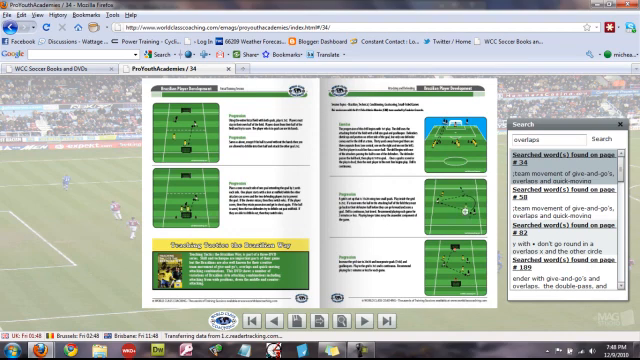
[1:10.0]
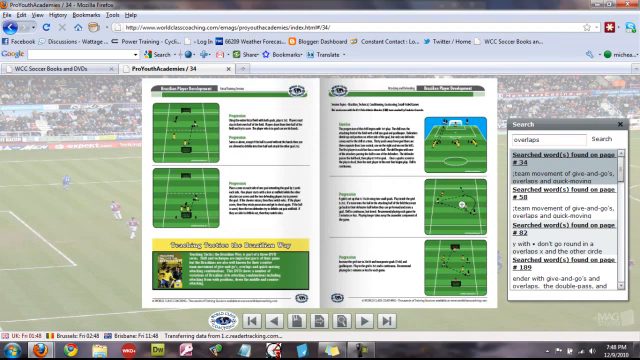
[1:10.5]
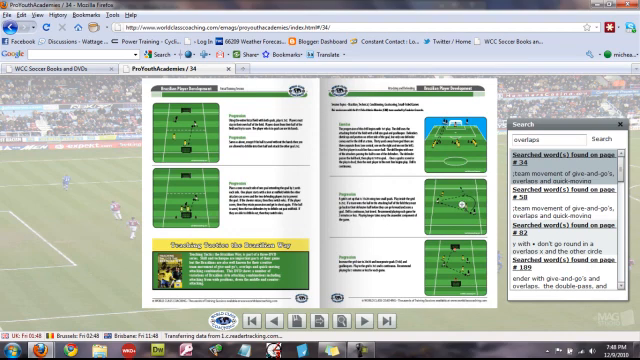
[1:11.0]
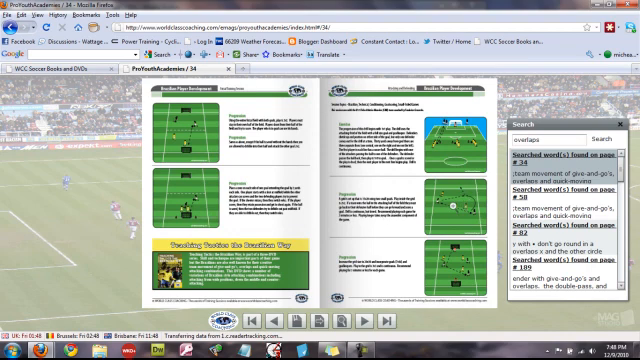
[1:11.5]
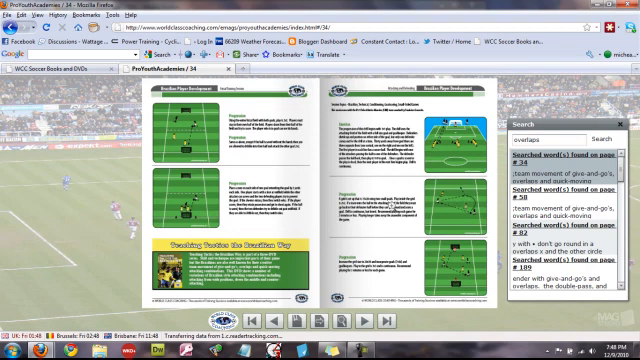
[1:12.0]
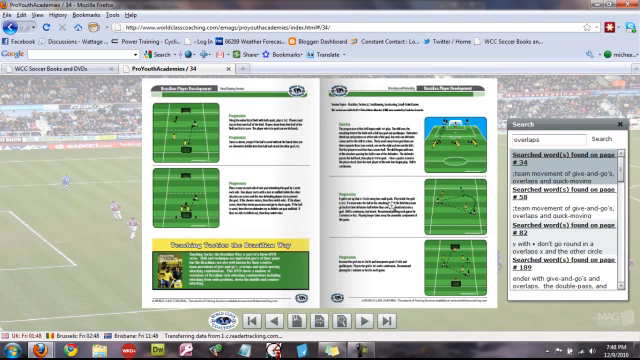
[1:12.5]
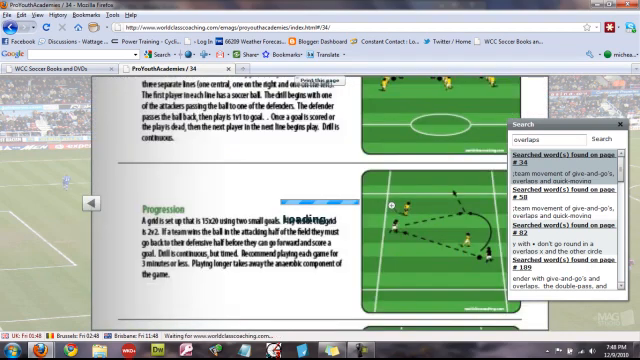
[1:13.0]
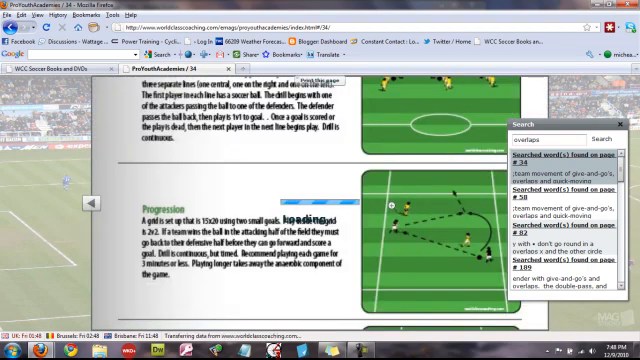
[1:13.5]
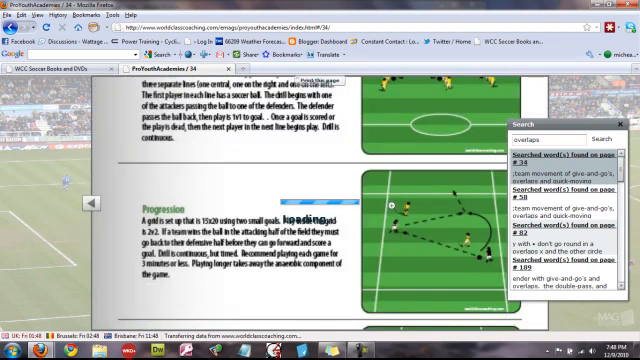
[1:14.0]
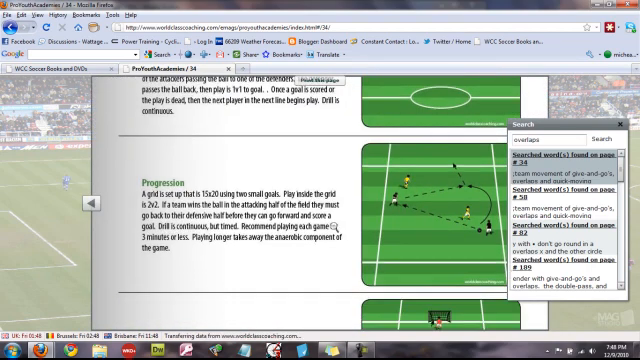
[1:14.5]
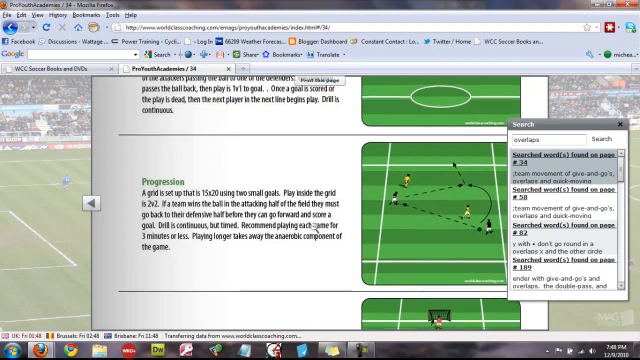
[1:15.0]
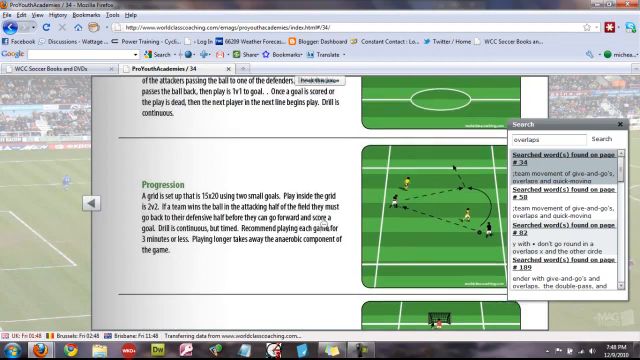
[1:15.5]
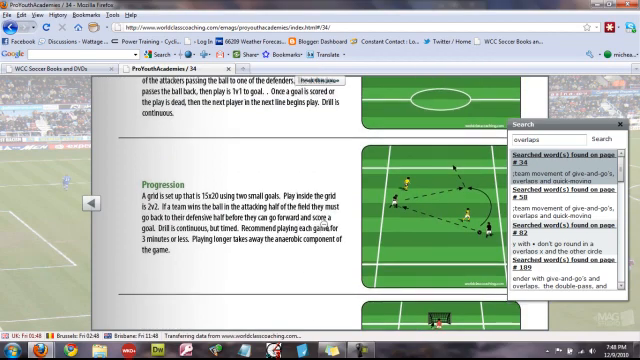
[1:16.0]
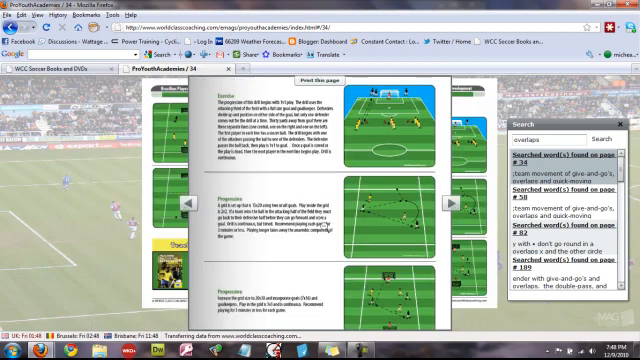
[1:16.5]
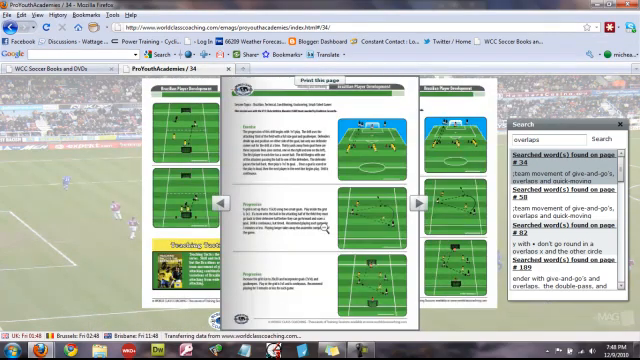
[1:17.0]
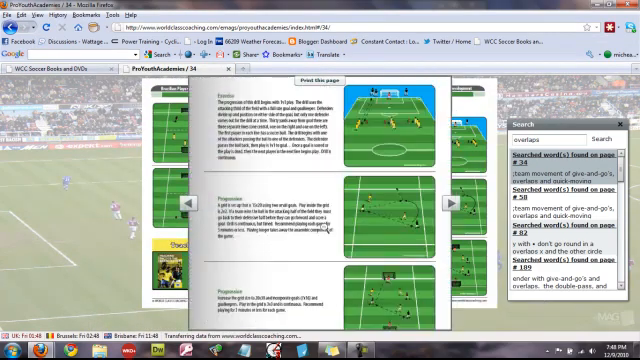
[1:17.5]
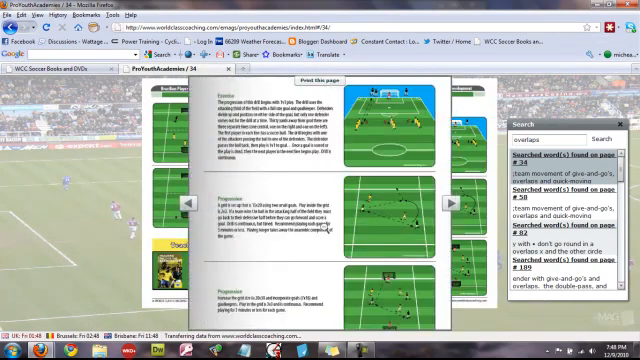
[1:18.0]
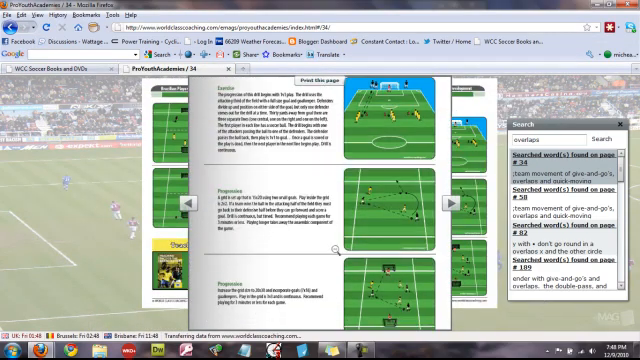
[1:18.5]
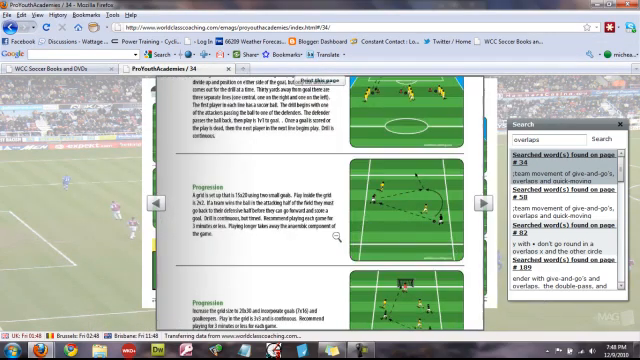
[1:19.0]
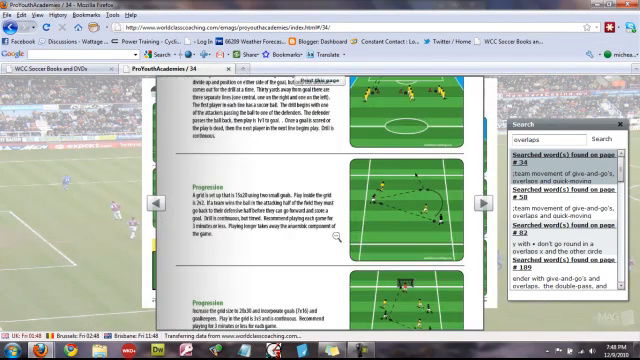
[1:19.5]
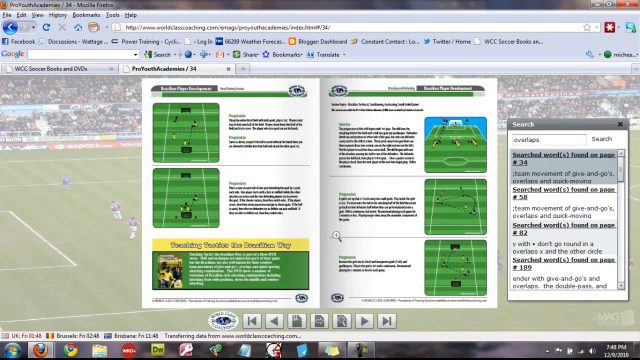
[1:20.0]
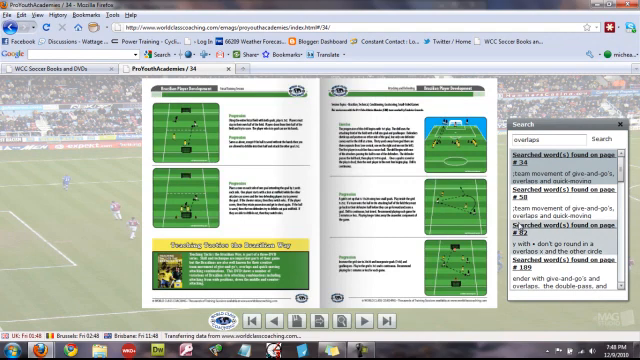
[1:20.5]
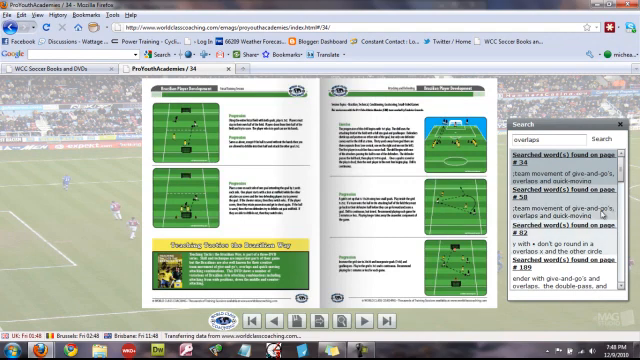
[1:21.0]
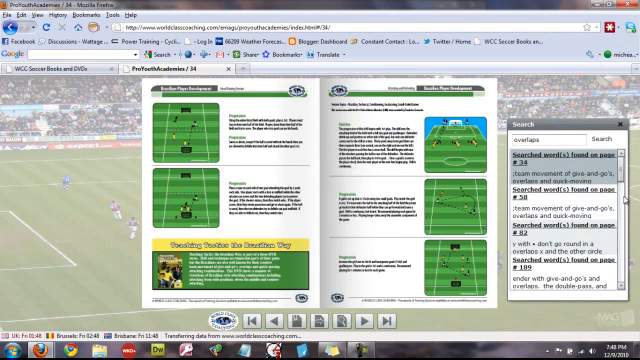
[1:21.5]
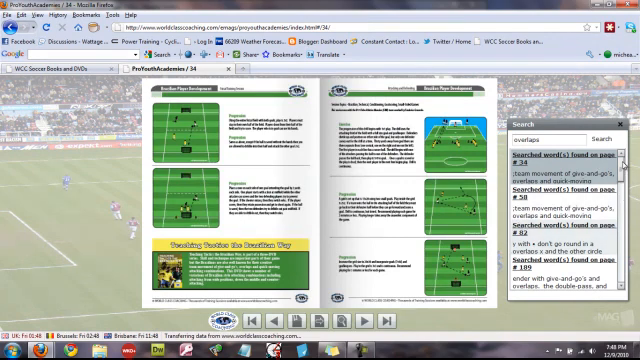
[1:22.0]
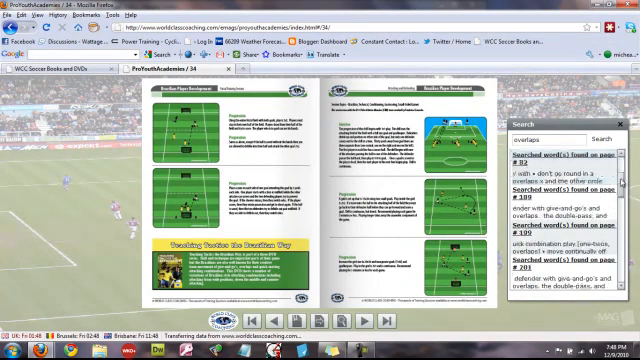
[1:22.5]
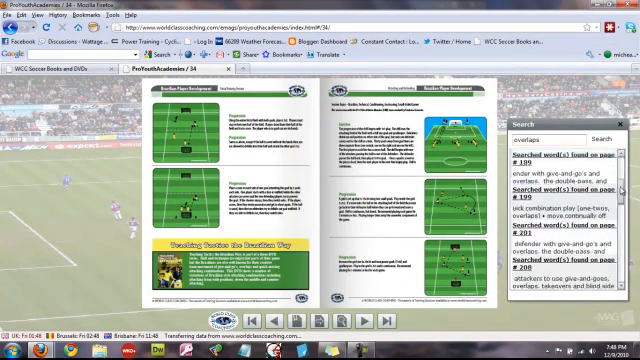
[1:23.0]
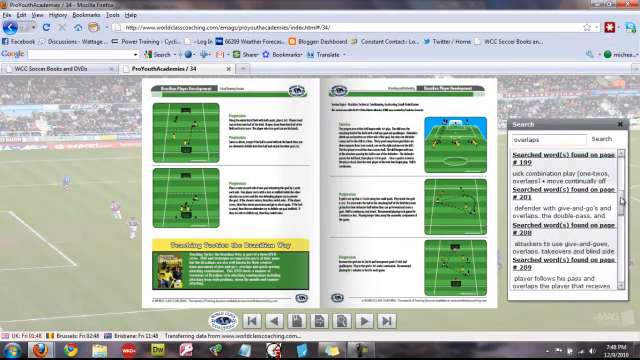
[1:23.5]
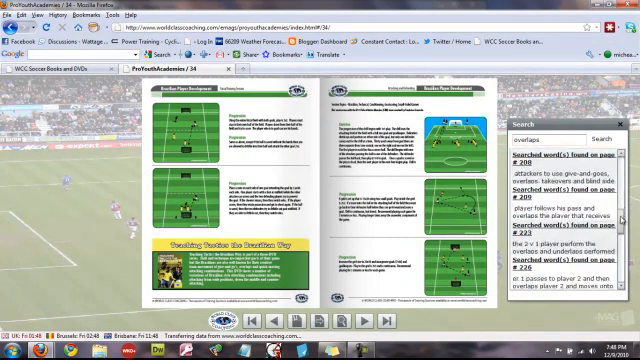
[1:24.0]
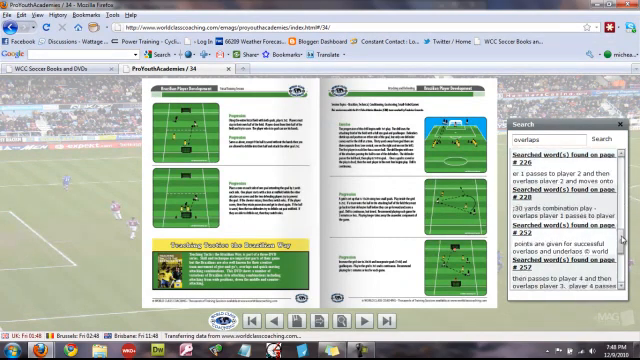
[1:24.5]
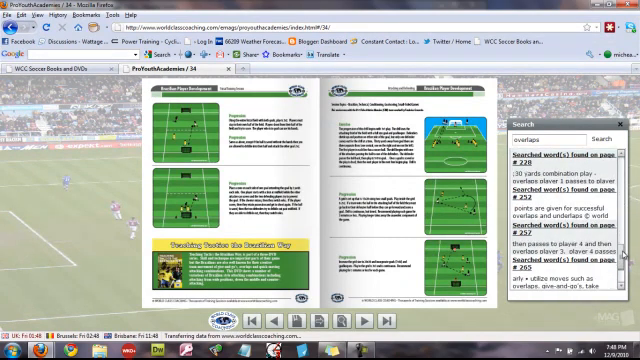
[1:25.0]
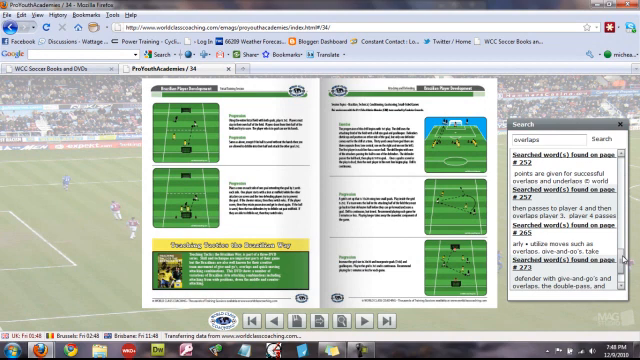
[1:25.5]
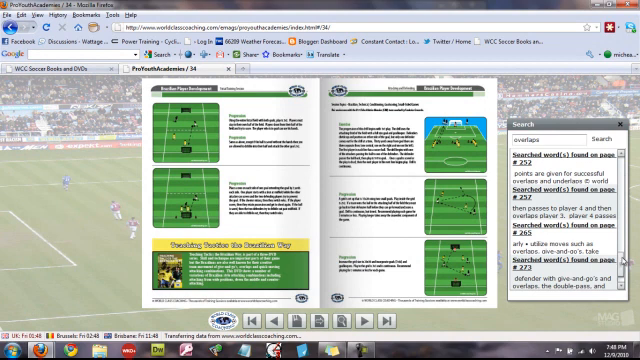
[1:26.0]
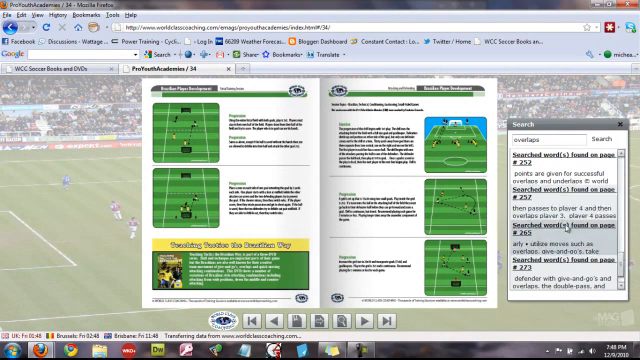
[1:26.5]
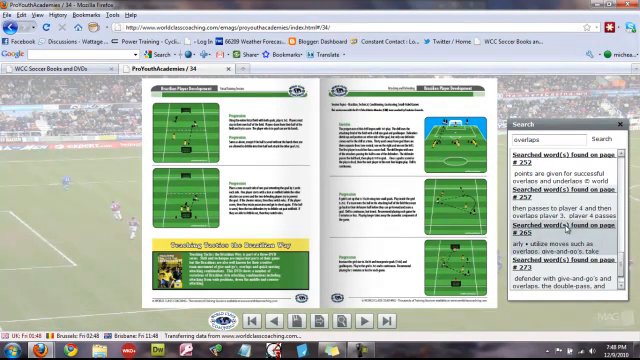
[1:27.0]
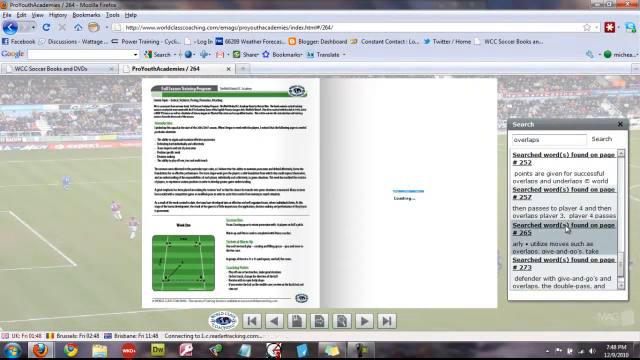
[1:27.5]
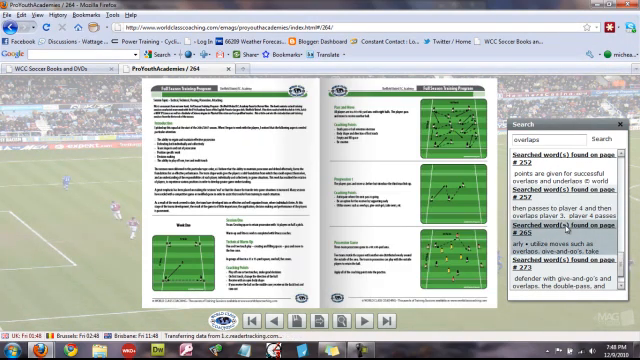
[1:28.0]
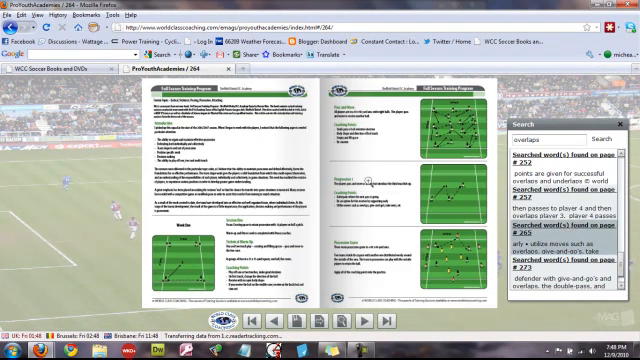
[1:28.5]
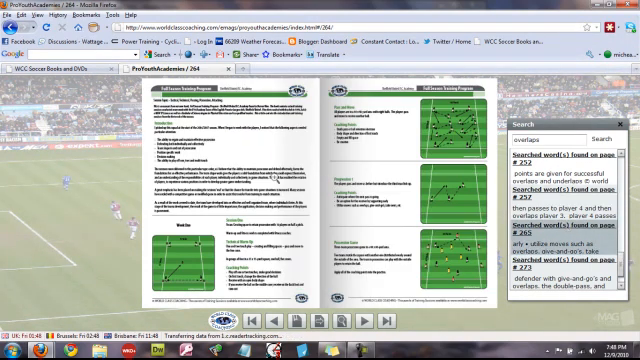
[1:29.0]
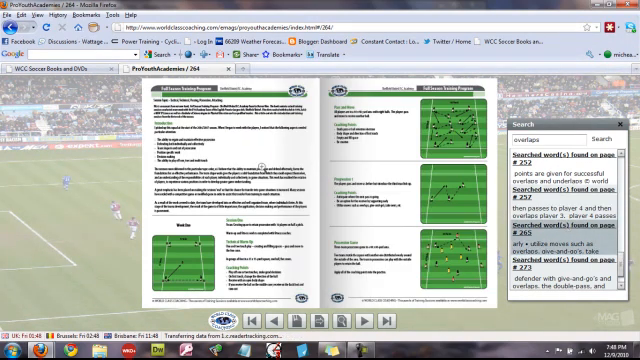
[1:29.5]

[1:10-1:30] A soccer field that is sort of lightened out fills the background, with search results in the foreground. On the right side of the screen is the search bar with search results in it. Two pages have popped up, showing what look like digital images of soccer fields, like in a video game. The right page has three soccer fields in a vertical line, and the pointer is on the middle one. The pointer turns into a magnifying glass with a cross in it and moves over to the writing, zooming in on it. To the left of the soccer field the text reads "progression. A grid is set up that is 15 times 20 using two small goals", followed by more text. The view zooms out so the text can't be read, zooms in, and zooms back out. The pointer then goes over to the search results, clicks on the scroll bar, scrolls all the way down to the bottom, and clicks another search result, and two more pages pop up.